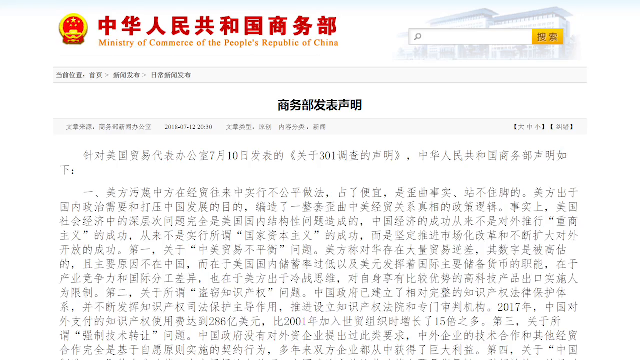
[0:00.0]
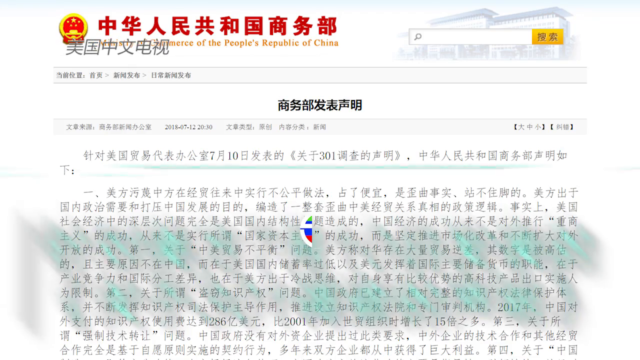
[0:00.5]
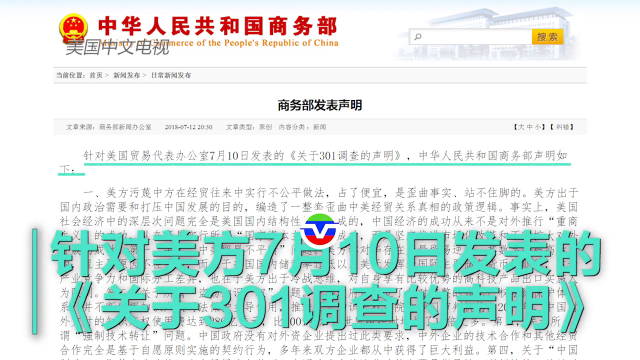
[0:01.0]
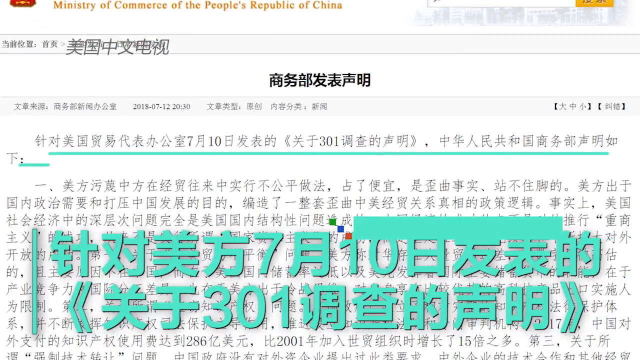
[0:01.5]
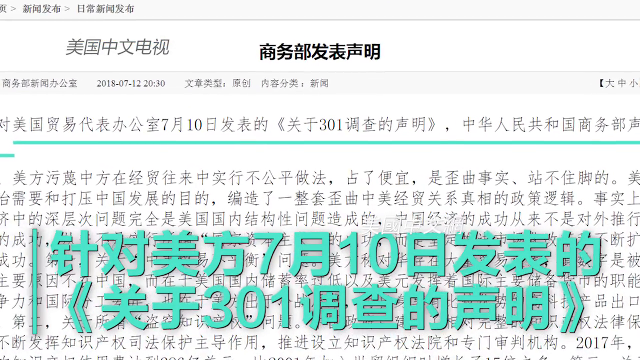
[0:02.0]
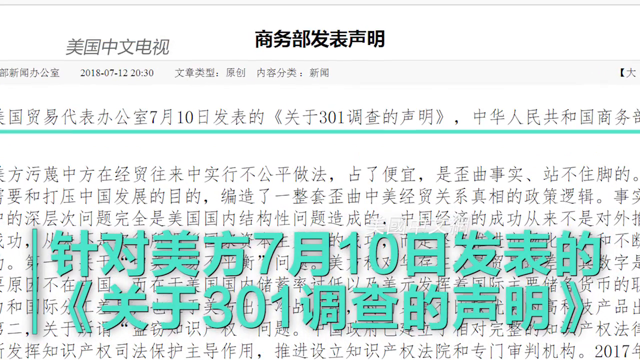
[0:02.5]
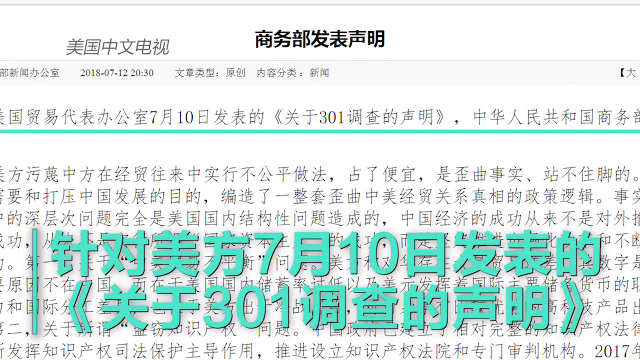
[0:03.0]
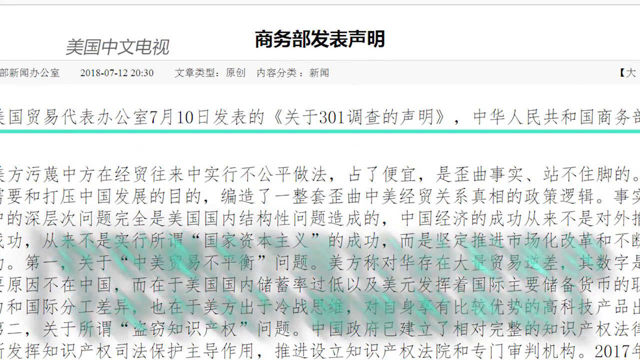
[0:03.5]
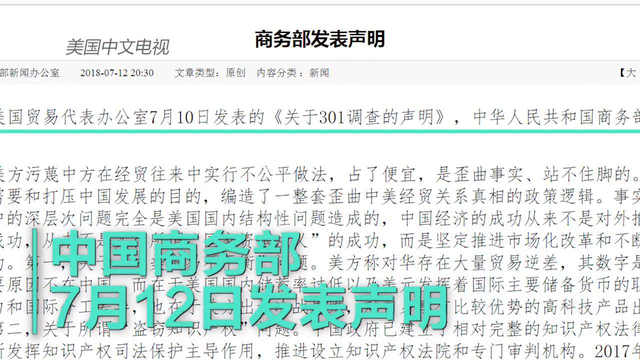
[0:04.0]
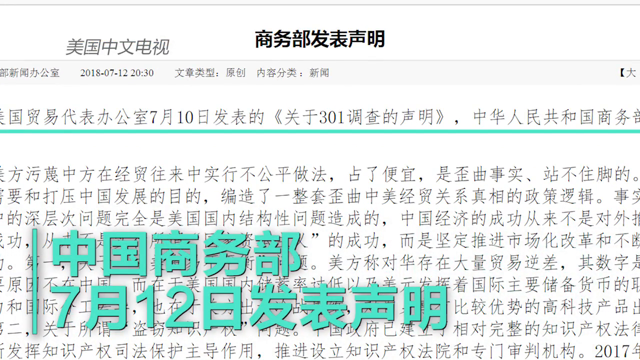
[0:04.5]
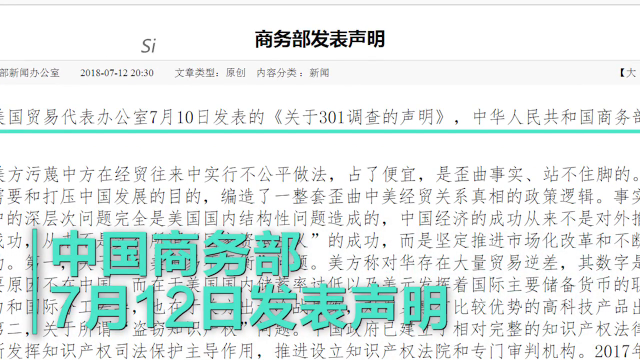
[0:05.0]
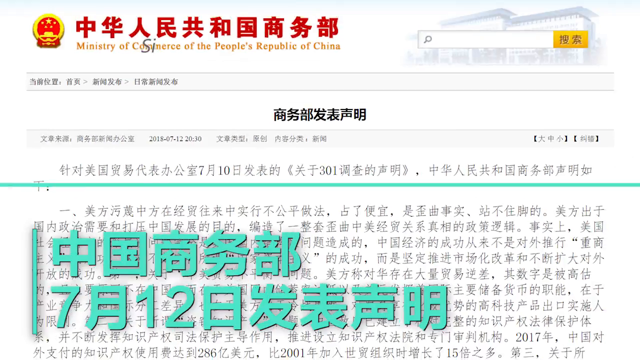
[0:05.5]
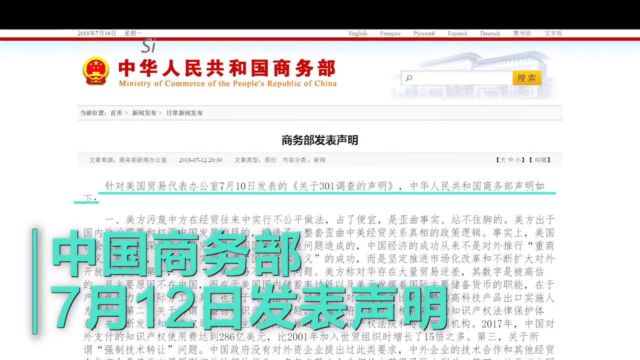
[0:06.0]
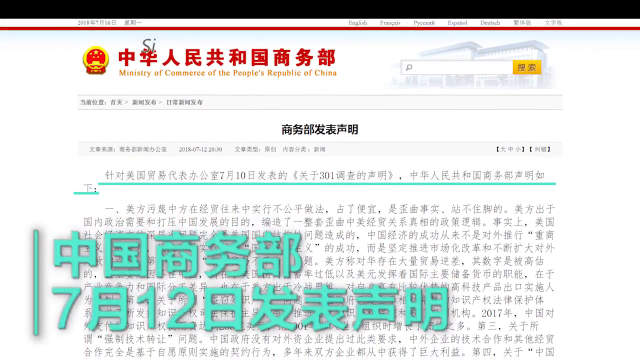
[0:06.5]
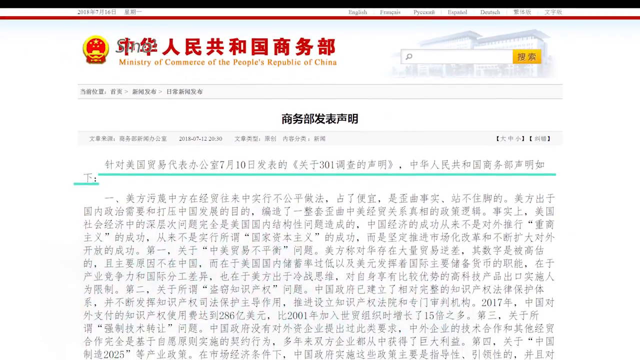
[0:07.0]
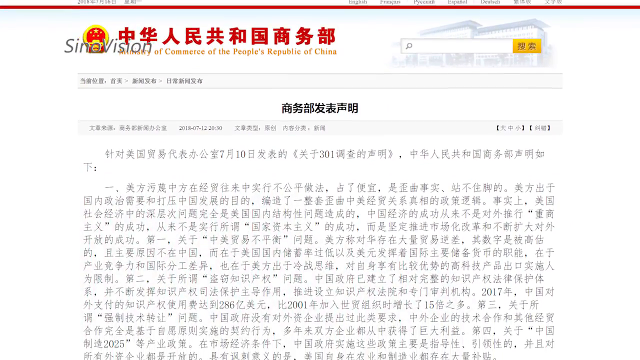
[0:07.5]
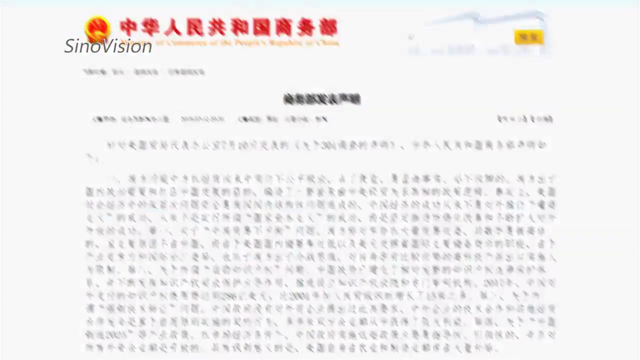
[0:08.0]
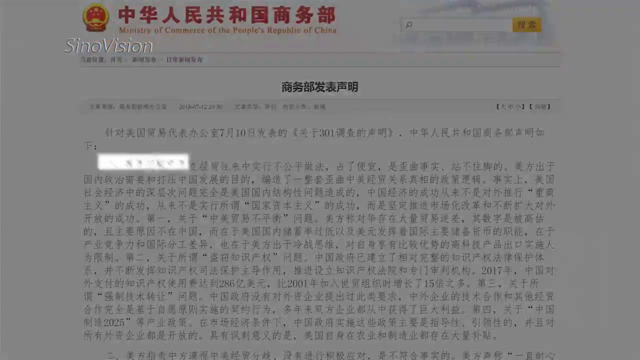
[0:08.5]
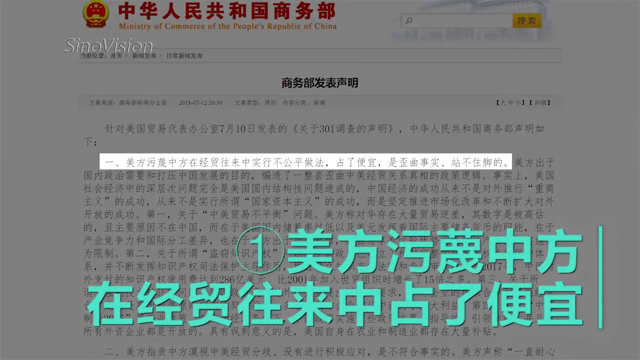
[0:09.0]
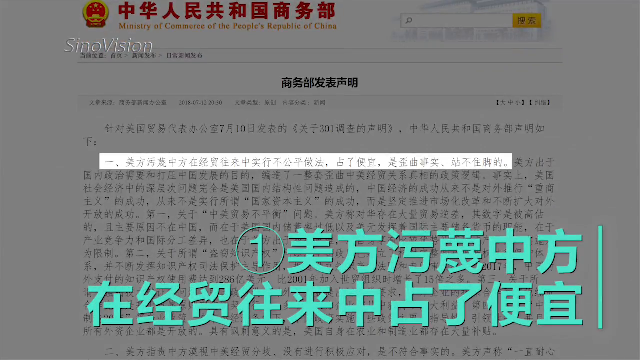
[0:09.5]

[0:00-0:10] A screen, possibly on someone's computer, shows what may be a paragraph of words in an Asian font. Most of the text is small and black, but some areas suddenly appear in a dark, teal-like color and larger on the screen, drawing attention to them. There is a header at the top, and the first couple of lines are underlined in teal before the view zeros in on another page. At the very top some of the print is in red, almost like a title, and in English it reads "Ministry of Commerce of the People's Republic of China." Much of the print is probably Chinese. An area at the top appears to be for searching, so it may be a website.